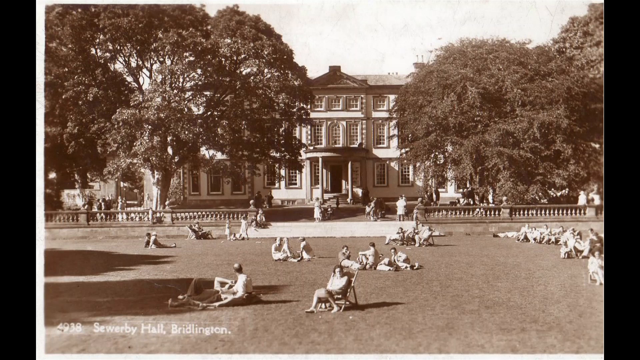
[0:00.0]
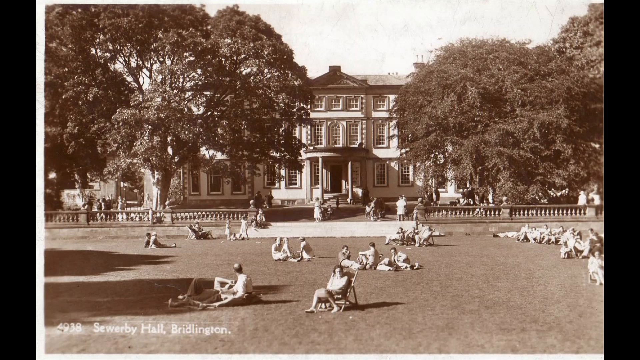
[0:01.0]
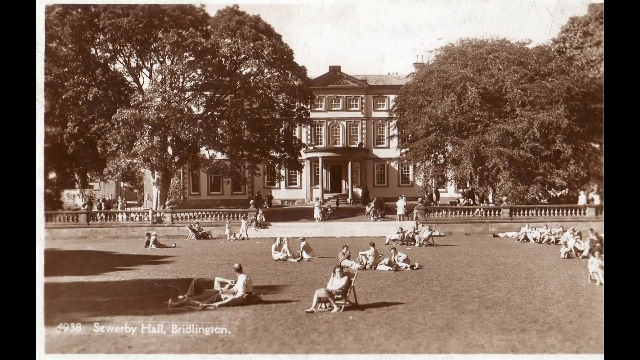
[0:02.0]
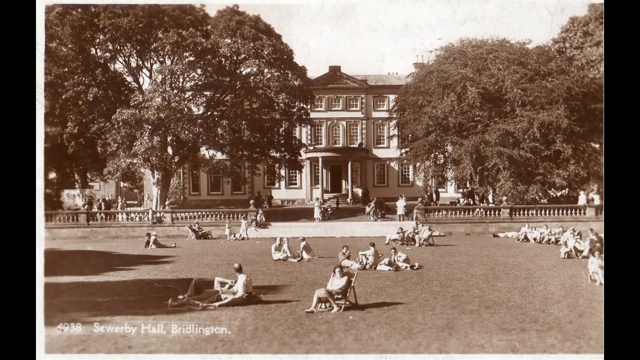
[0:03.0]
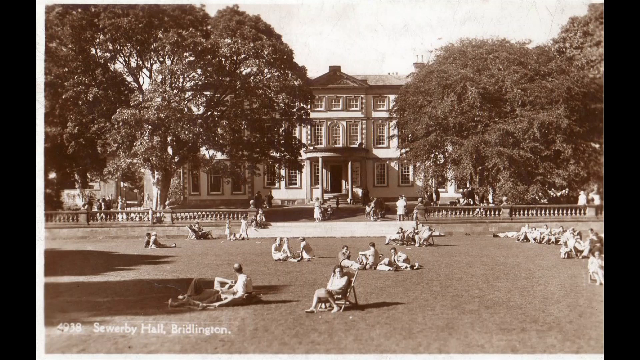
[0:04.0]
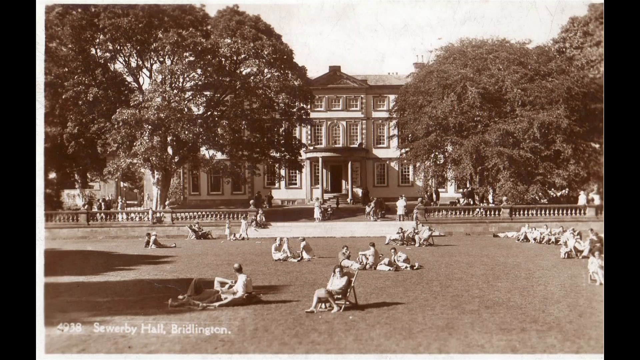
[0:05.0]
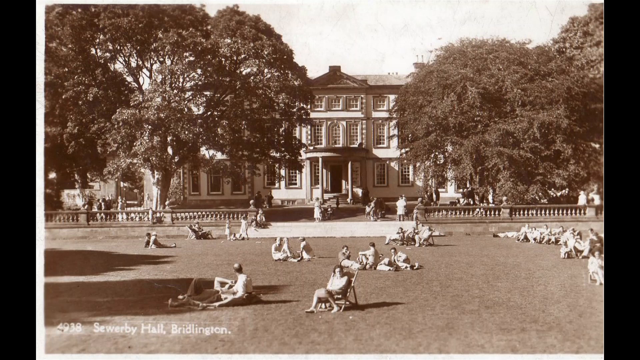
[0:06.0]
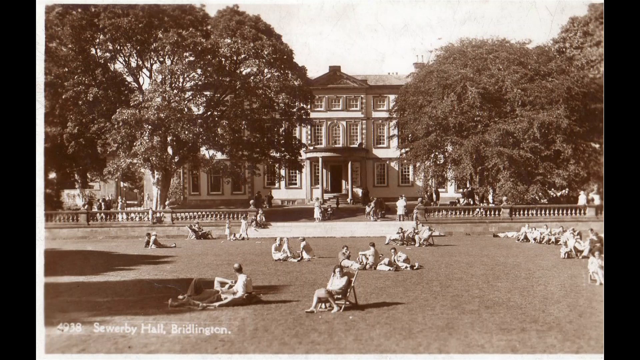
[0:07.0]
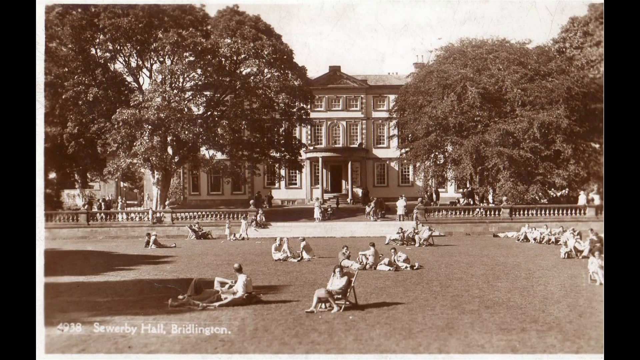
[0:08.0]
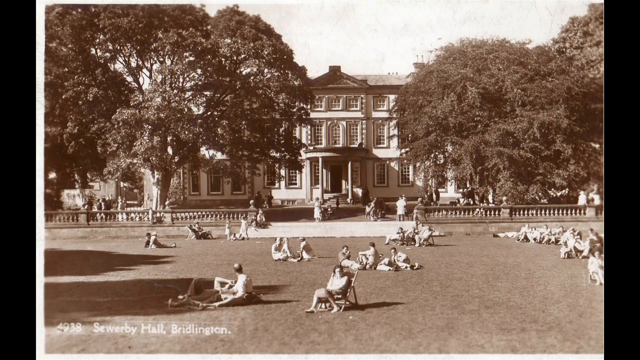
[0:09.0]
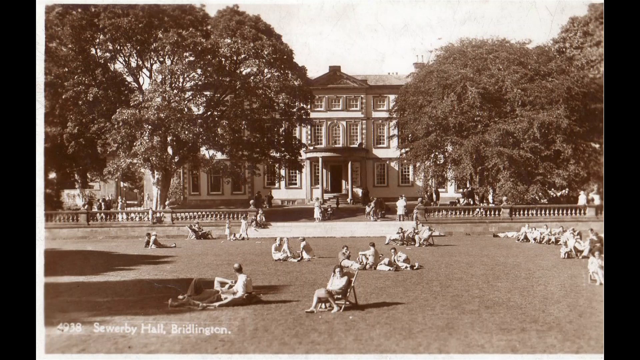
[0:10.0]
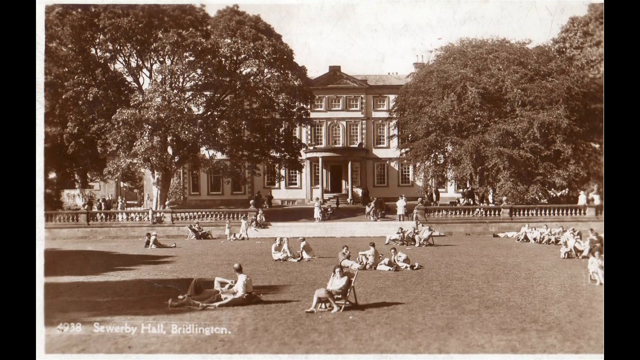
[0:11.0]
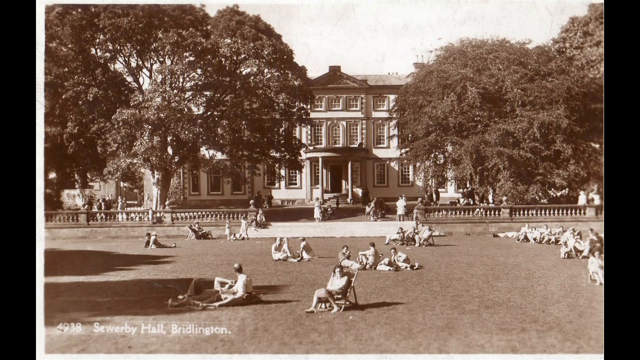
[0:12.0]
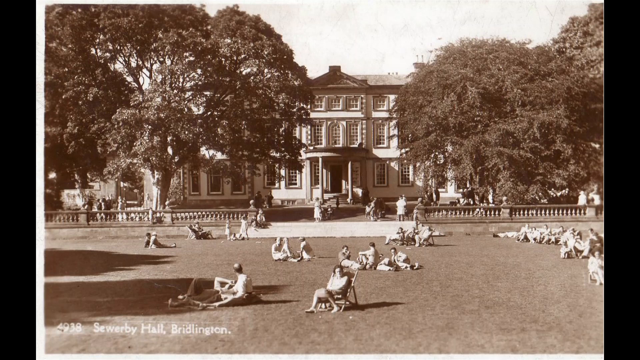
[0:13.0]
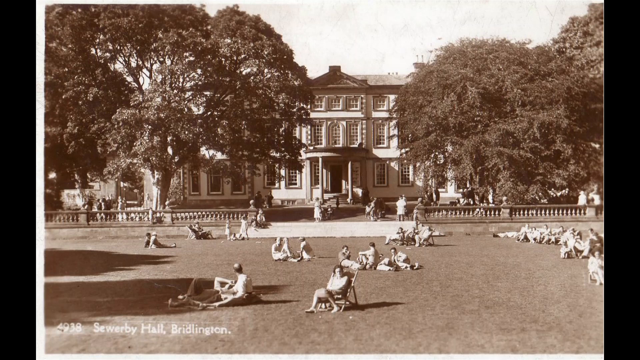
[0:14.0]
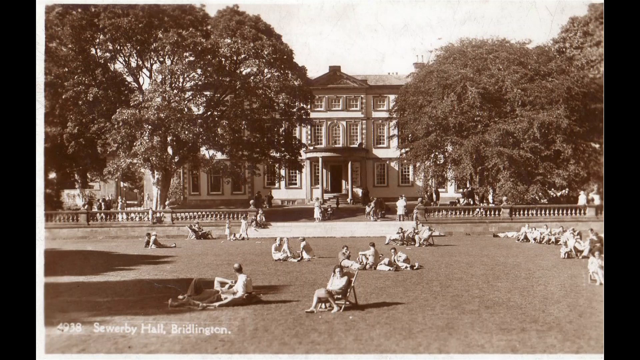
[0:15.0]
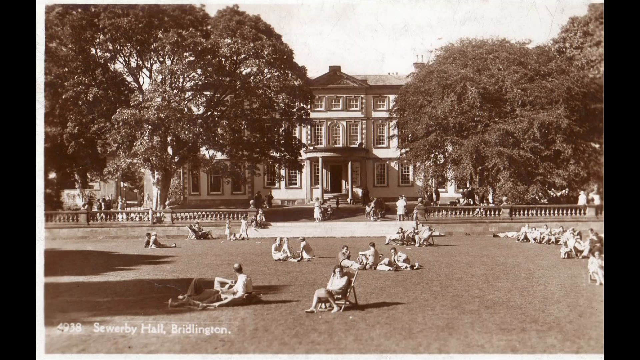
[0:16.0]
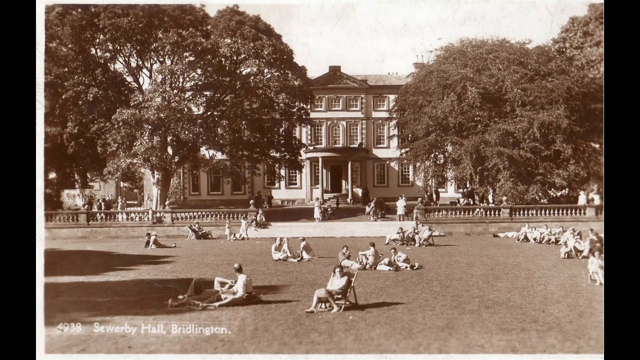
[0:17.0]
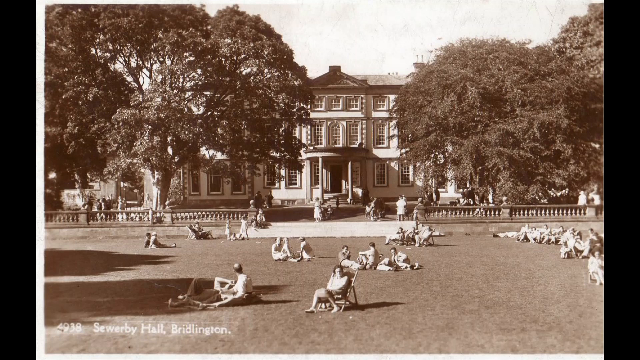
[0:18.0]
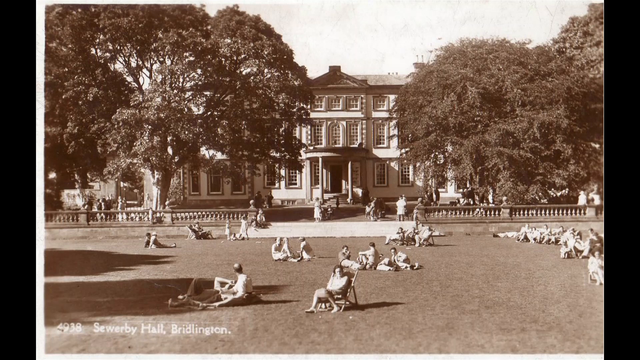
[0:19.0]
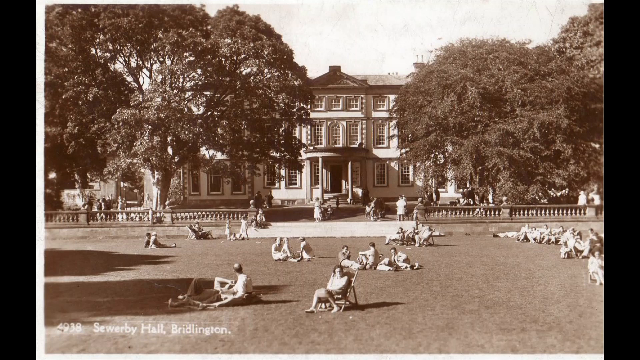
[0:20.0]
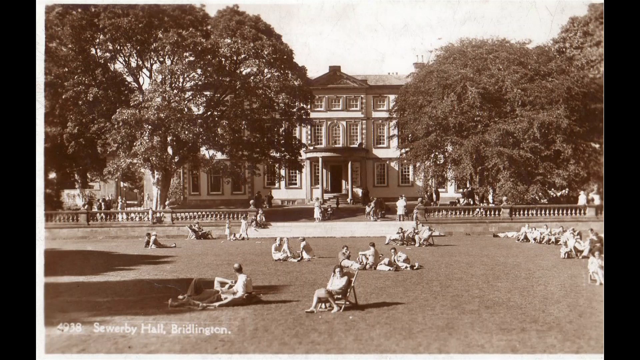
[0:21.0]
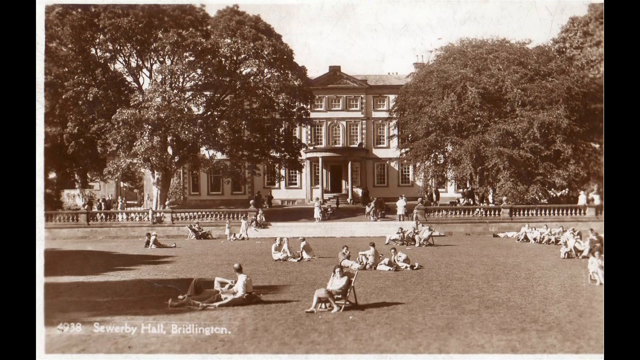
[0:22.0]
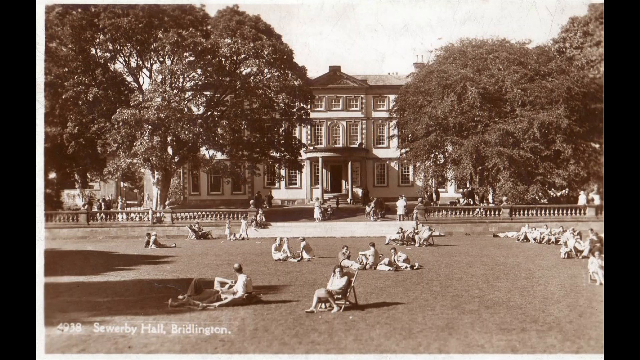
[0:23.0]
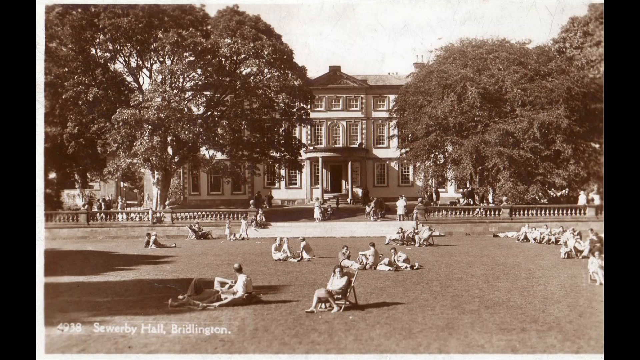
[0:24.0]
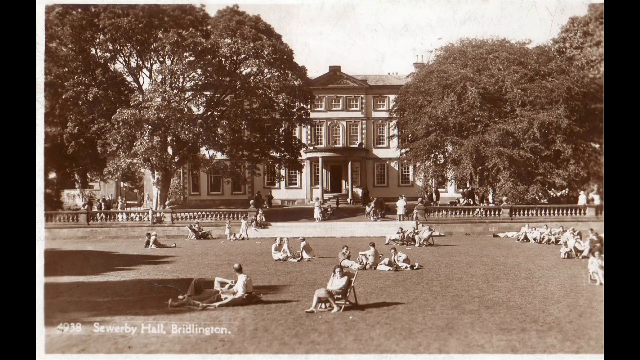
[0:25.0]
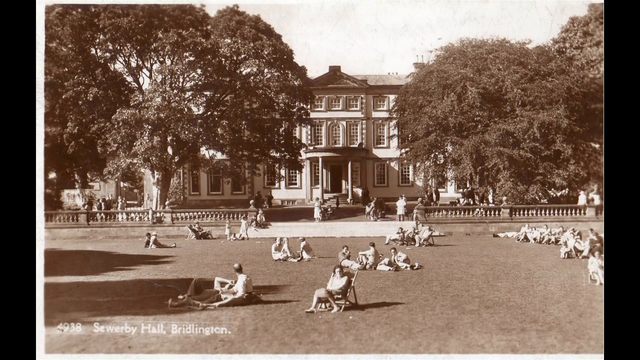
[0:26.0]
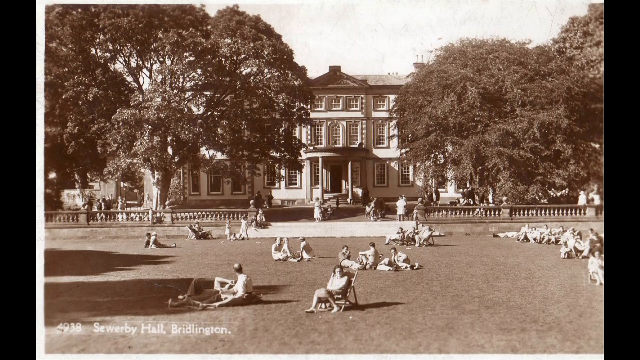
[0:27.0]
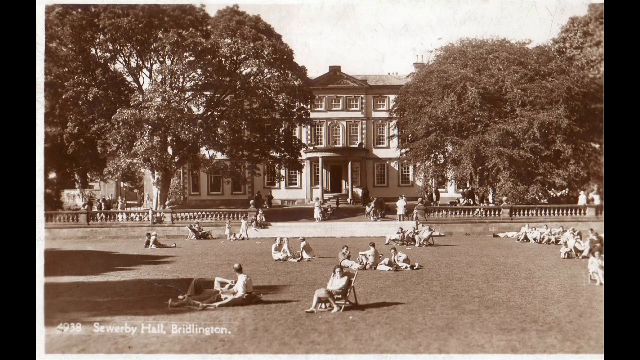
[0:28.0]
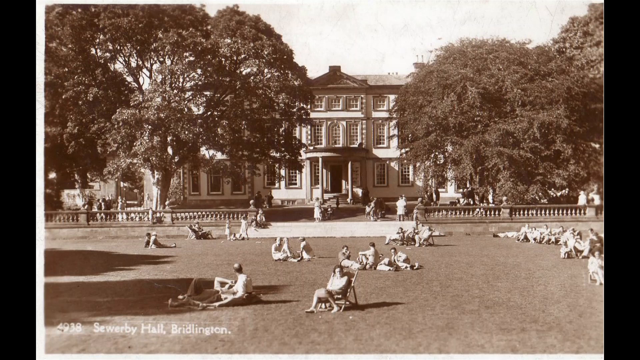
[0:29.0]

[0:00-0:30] A black and white picture shows the text "4938 Sewerby Hall, Bridlington". It depicts a very large, decorated, ornate school, with students camped out on the front lawn: some sit in chairs, some are just lying down, and there are mixed couples as well as singles. Two trees are in front of the school. The photo seems to date from around the 1930s or 40s, or perhaps a little later, in the early 50s.